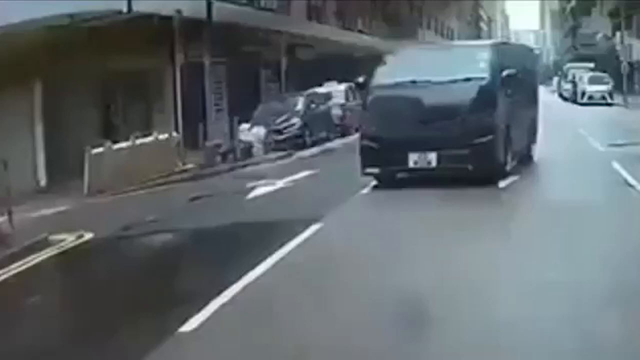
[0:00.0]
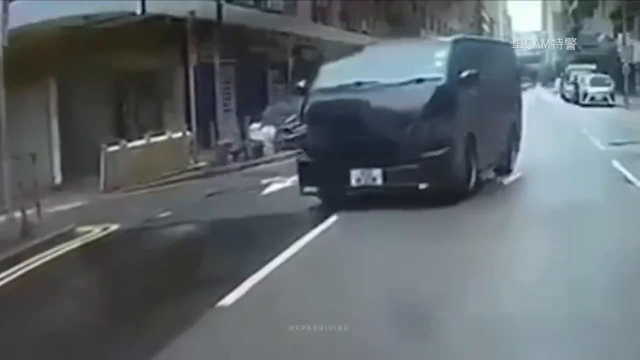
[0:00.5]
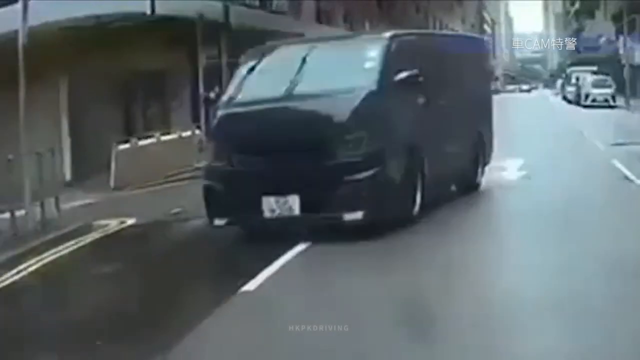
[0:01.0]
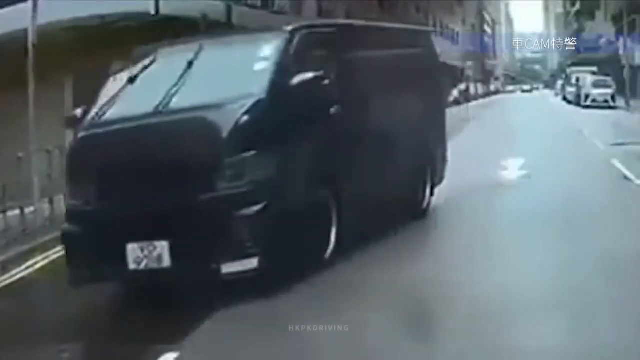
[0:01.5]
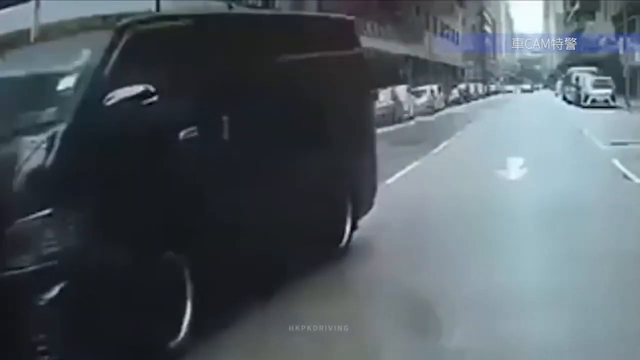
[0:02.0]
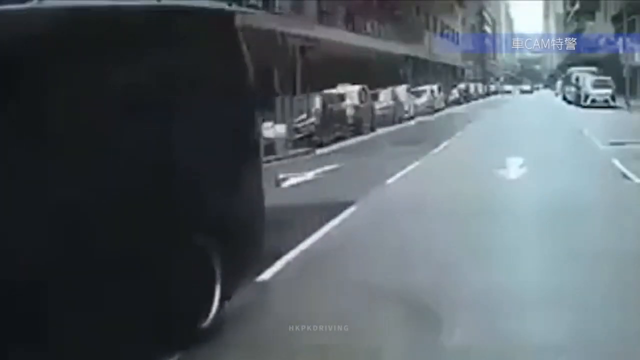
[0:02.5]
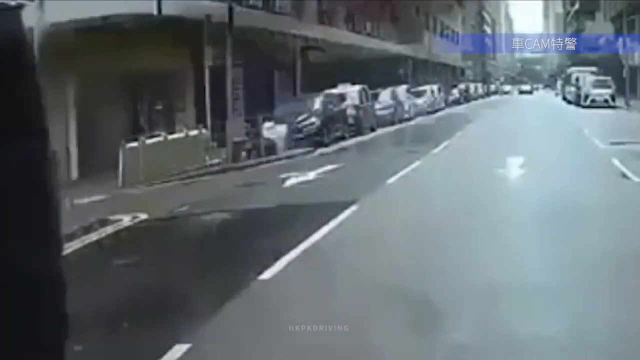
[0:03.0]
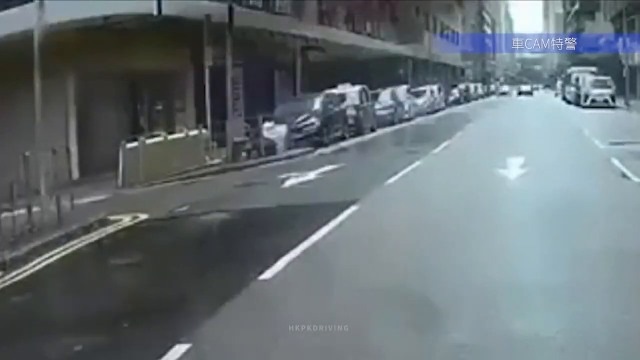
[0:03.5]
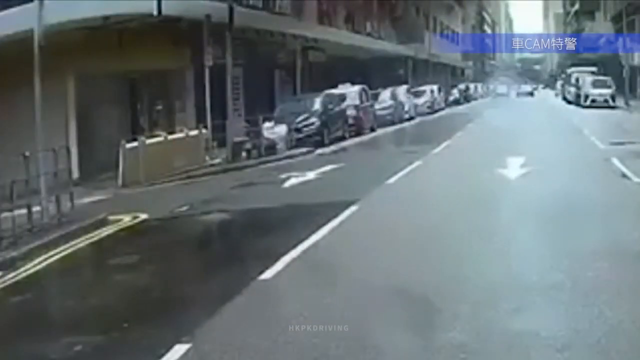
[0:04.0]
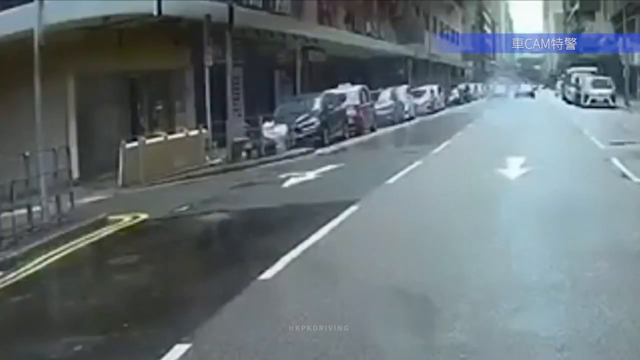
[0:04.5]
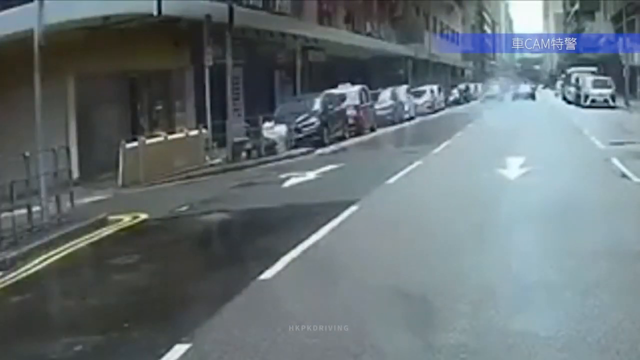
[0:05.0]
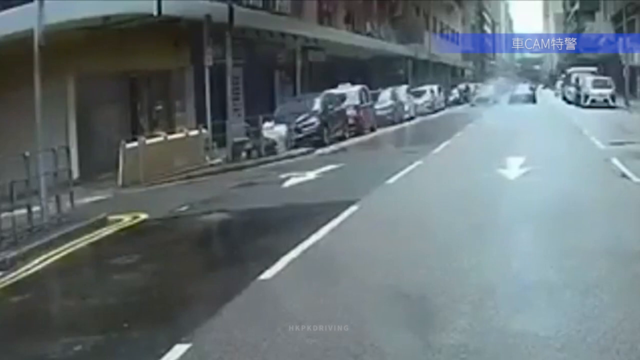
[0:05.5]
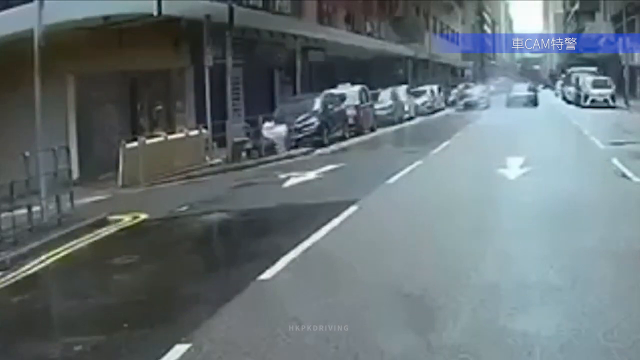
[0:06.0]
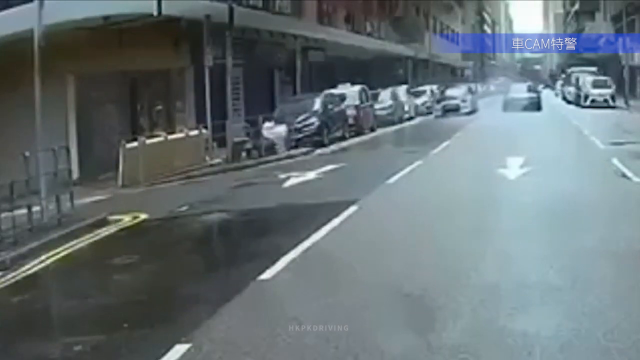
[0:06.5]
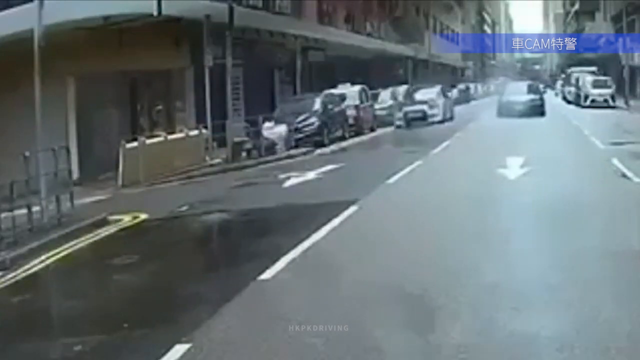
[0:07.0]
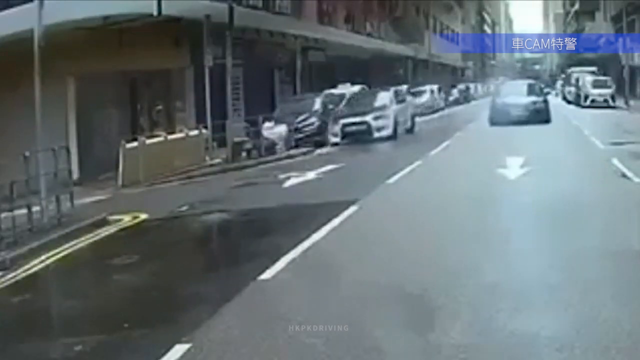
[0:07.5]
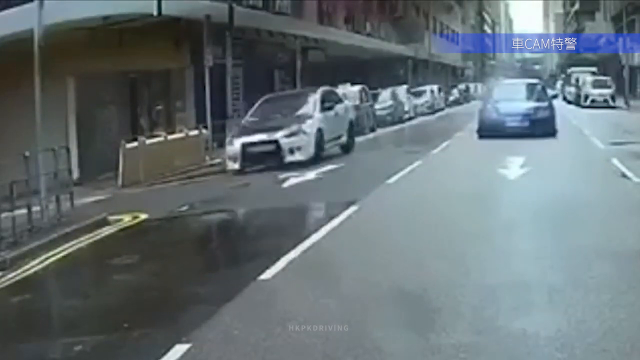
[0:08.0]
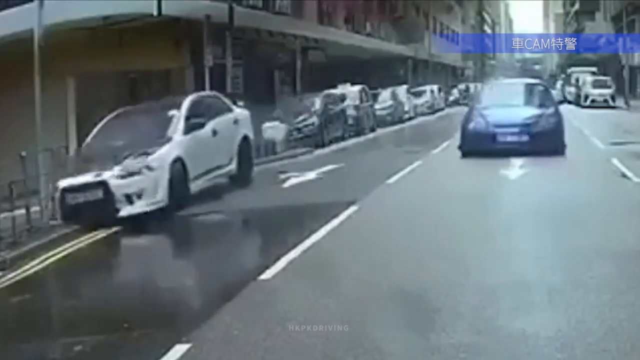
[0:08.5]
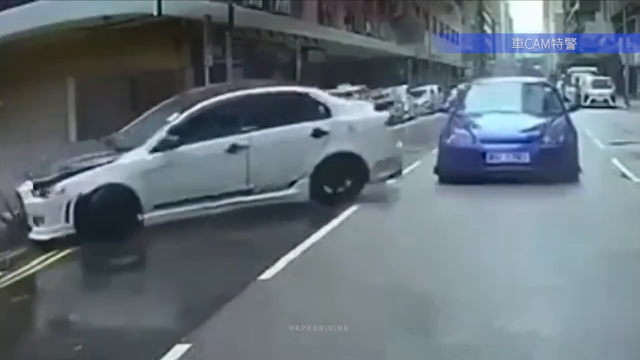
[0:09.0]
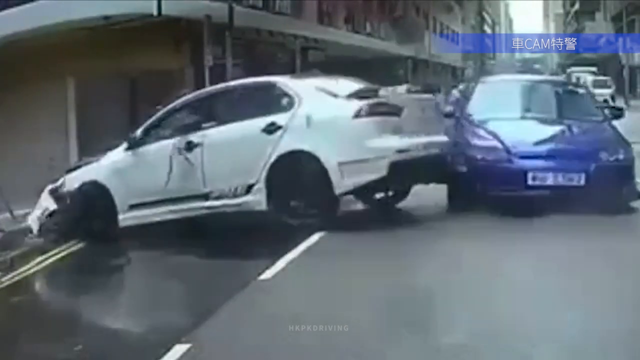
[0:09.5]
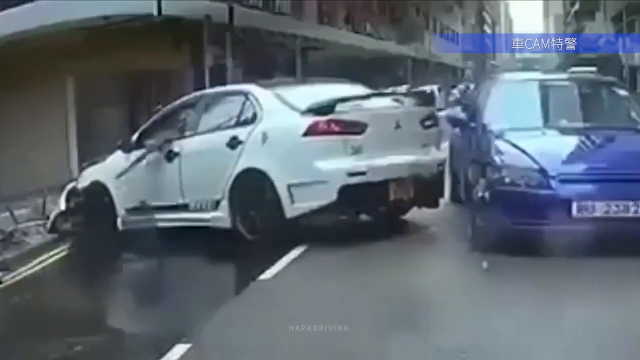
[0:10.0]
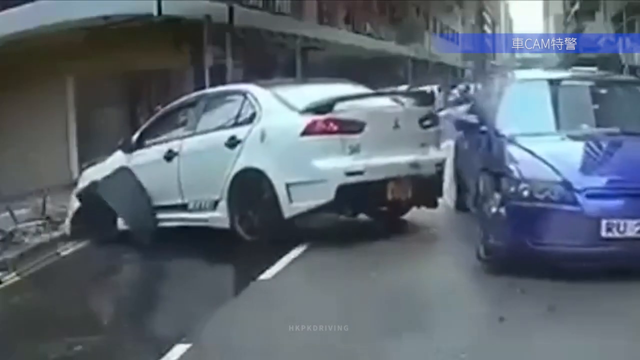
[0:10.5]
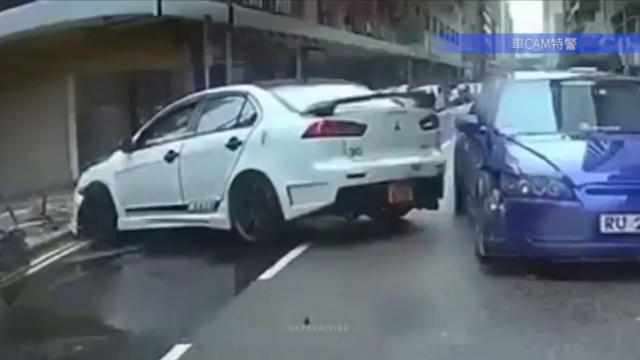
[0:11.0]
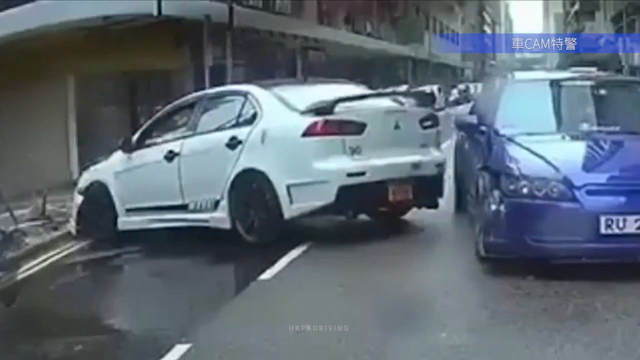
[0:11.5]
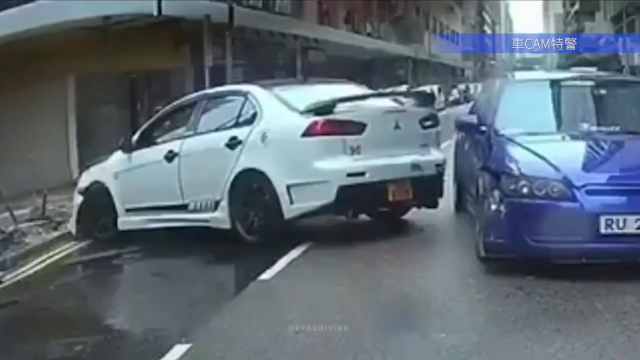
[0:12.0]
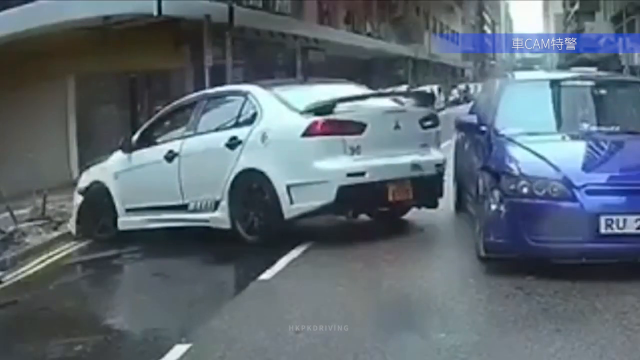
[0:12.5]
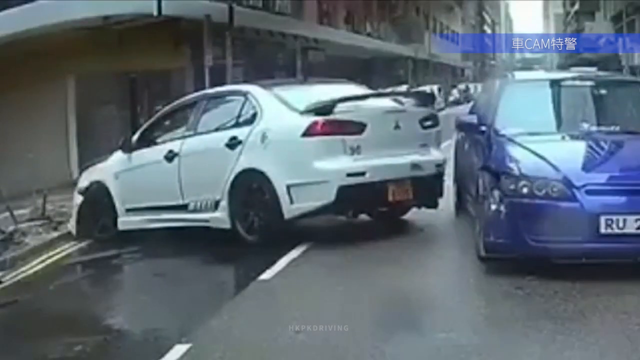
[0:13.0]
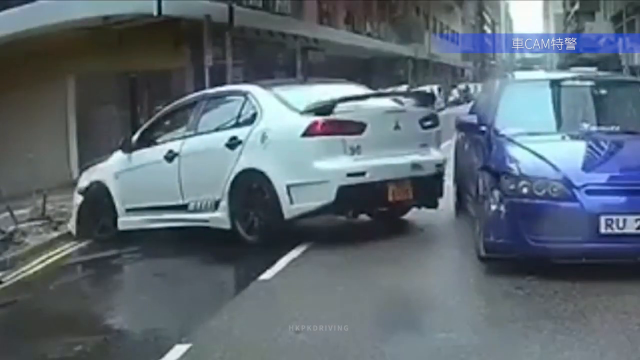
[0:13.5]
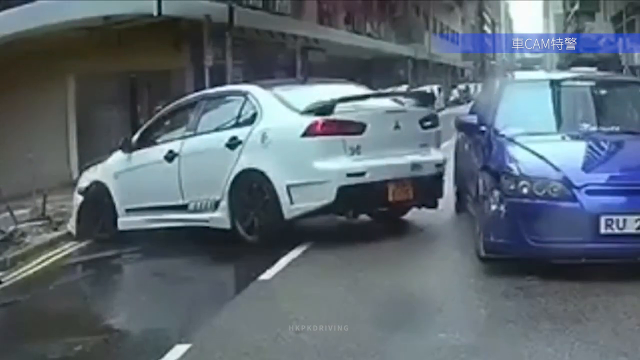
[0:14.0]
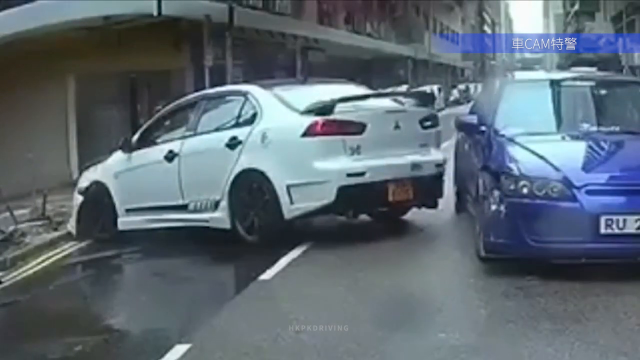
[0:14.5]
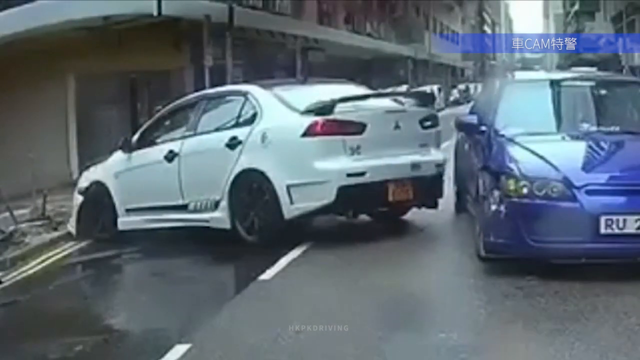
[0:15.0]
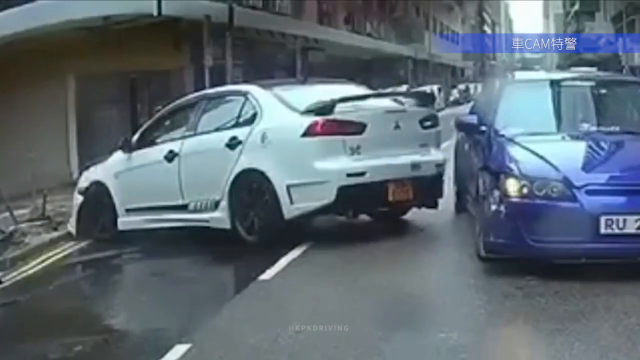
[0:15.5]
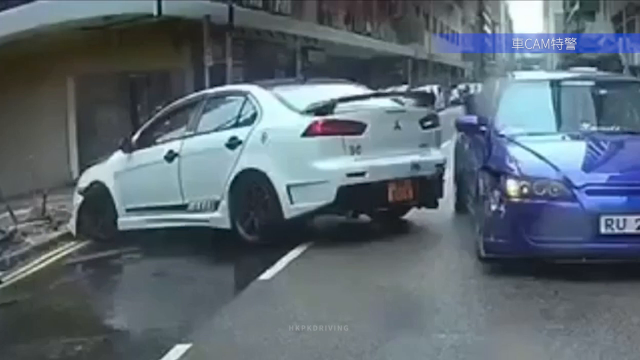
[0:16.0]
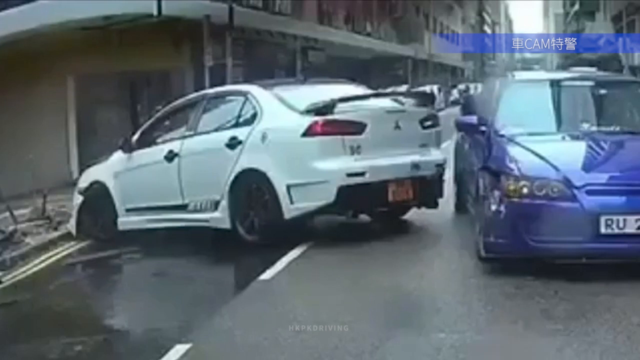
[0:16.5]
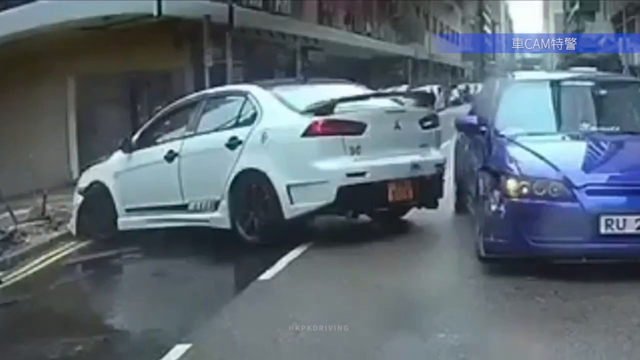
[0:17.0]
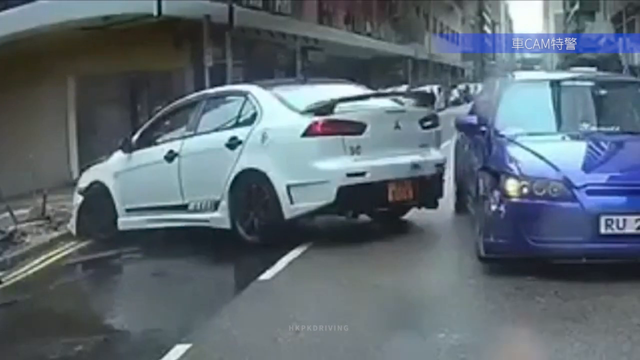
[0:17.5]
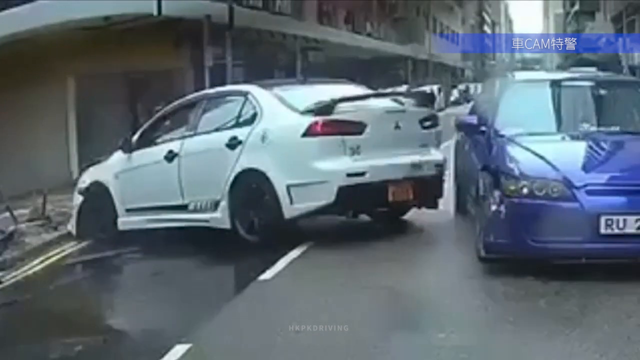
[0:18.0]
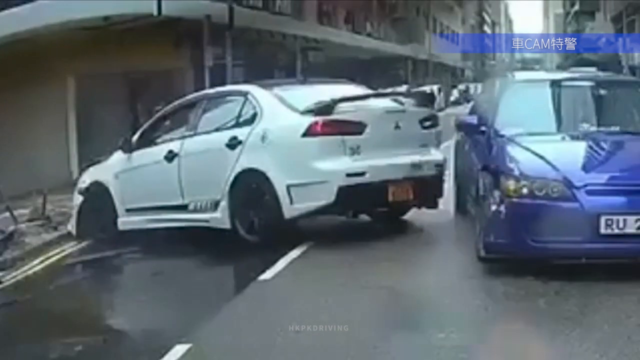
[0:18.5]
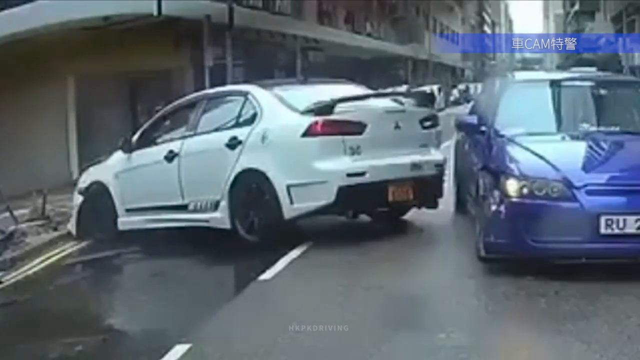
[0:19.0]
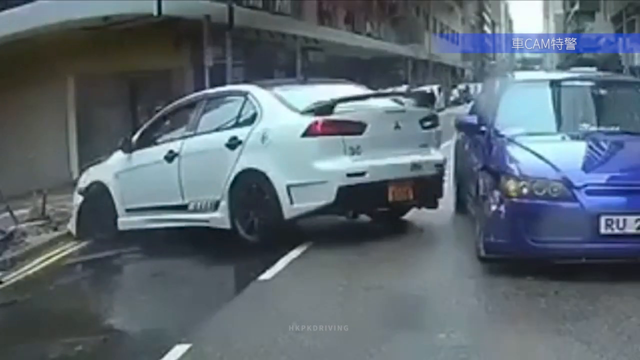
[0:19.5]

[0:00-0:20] A street in a small city appears to be a one-way street, judging by the arrows and the way the cars are parked on the side of the road. A black van comes down the road and merges into the right lane. In the top right of the video is a translucent blue banner that says "CAM" in English, with what is presumably the Chinese translation next to it. Two cars, a white car and a darker colored car, appear to be speeding down the road, the white car in the right lane and the darker car in the left lane. The white car goes over the curb and crashes into a pole on the side of the road, and its back end hits the darker blue car. Both cars come to a stop, and the blue car turns on its hazards.